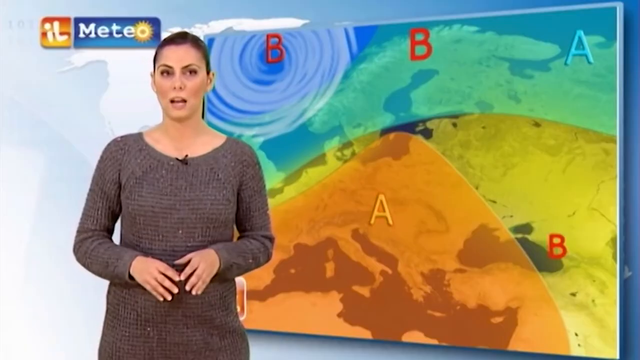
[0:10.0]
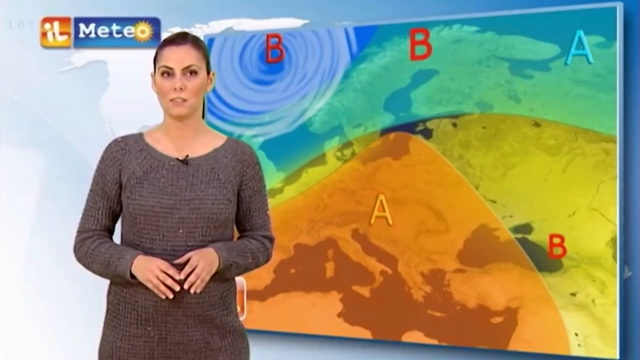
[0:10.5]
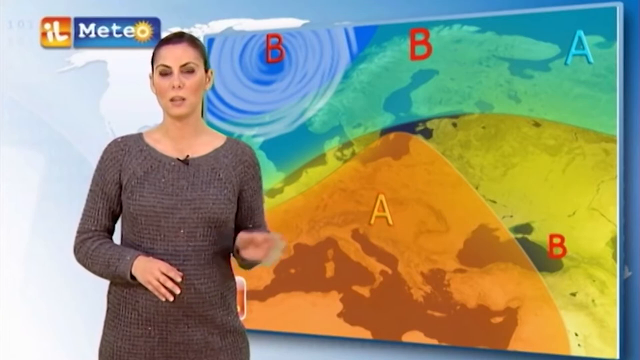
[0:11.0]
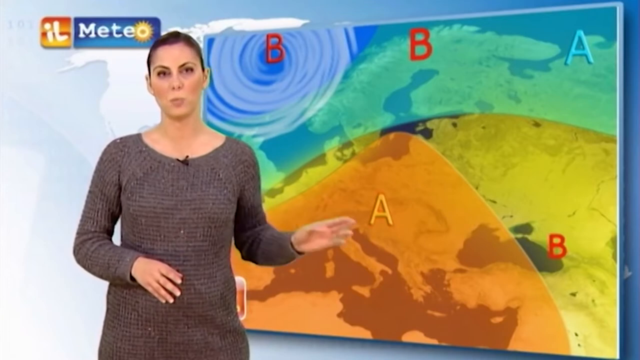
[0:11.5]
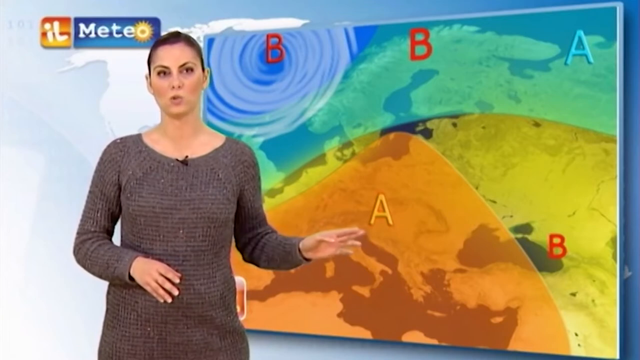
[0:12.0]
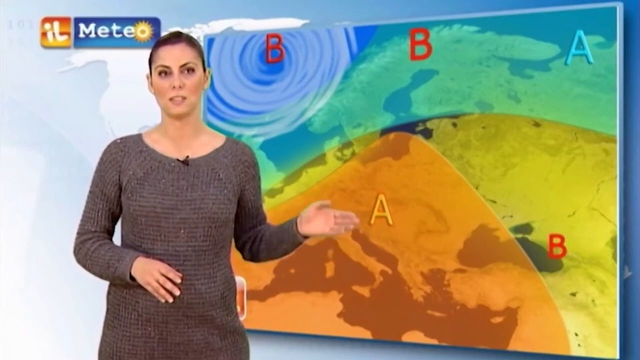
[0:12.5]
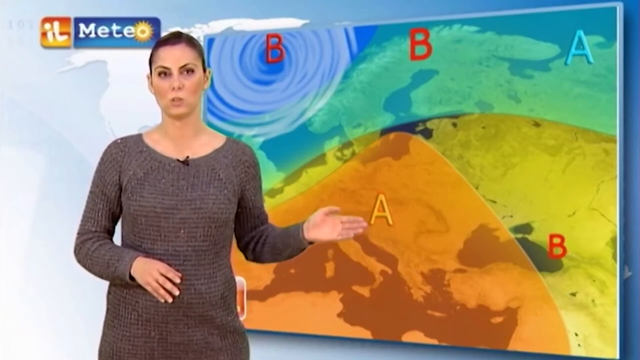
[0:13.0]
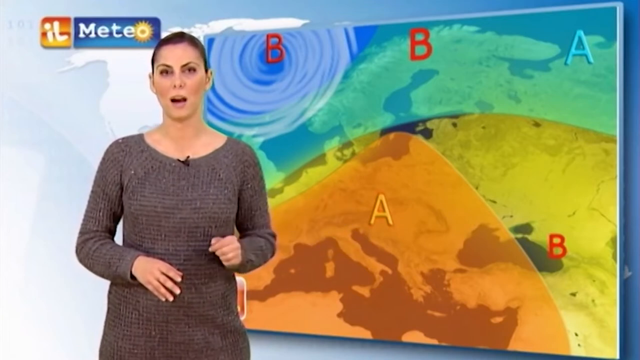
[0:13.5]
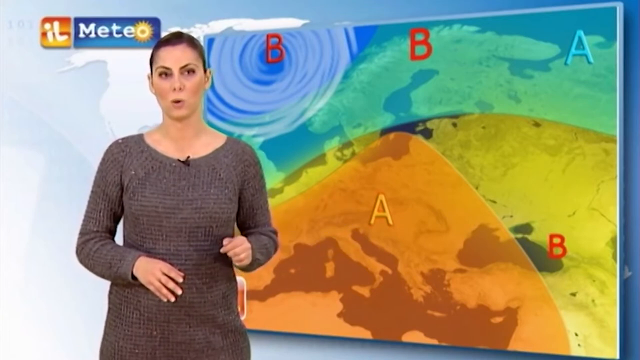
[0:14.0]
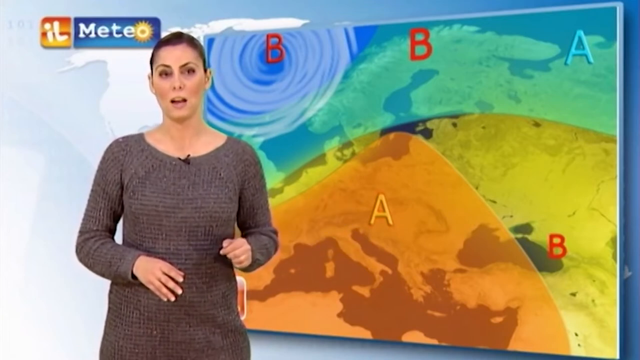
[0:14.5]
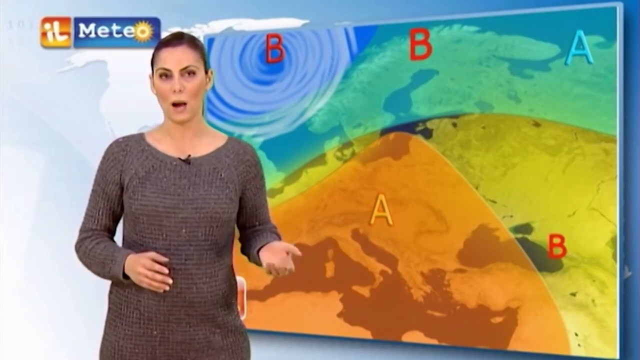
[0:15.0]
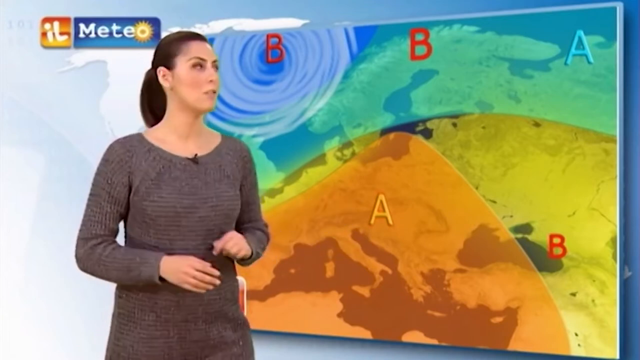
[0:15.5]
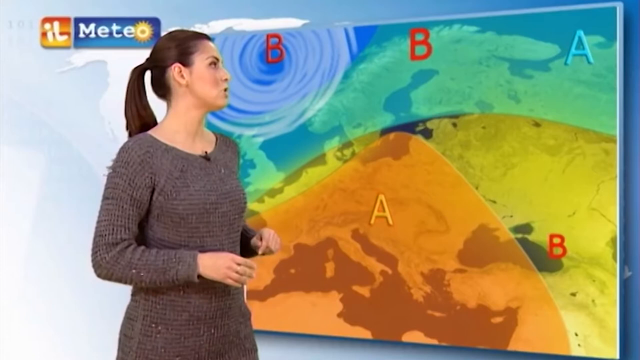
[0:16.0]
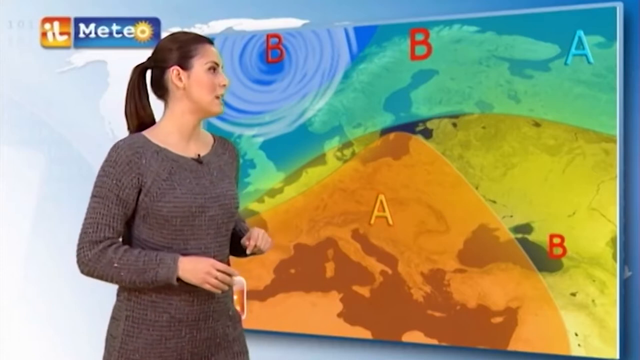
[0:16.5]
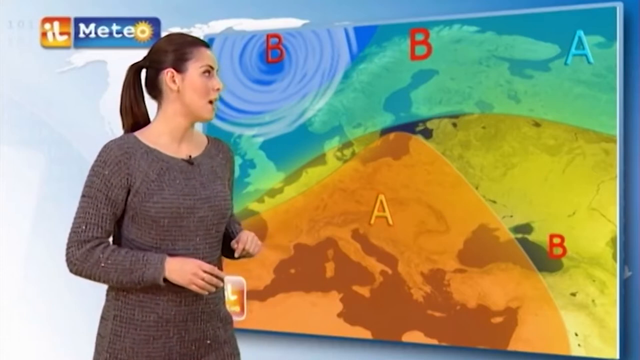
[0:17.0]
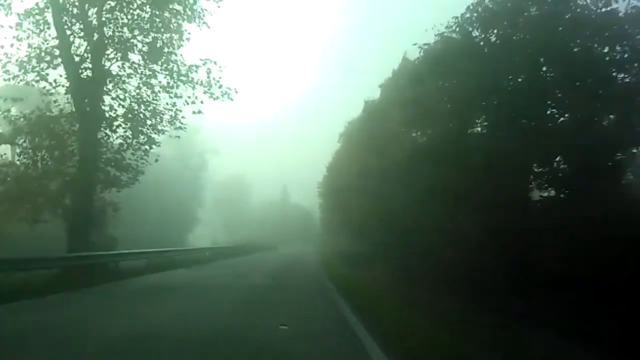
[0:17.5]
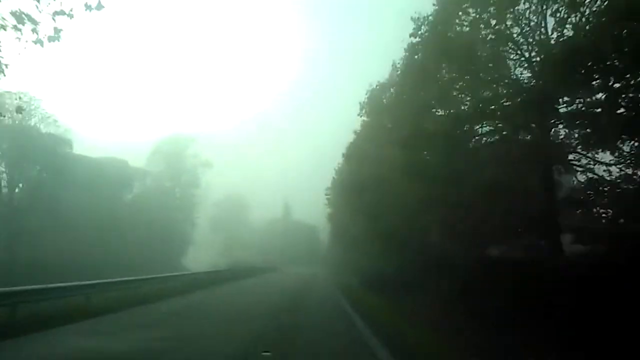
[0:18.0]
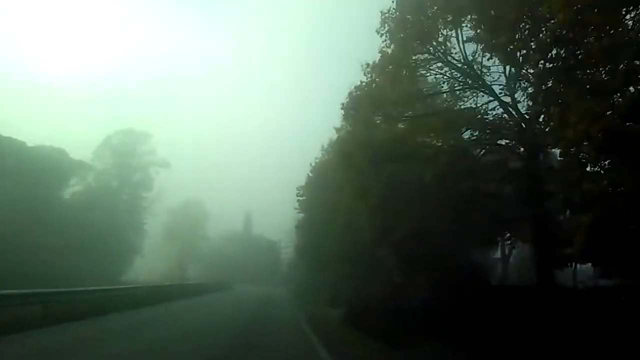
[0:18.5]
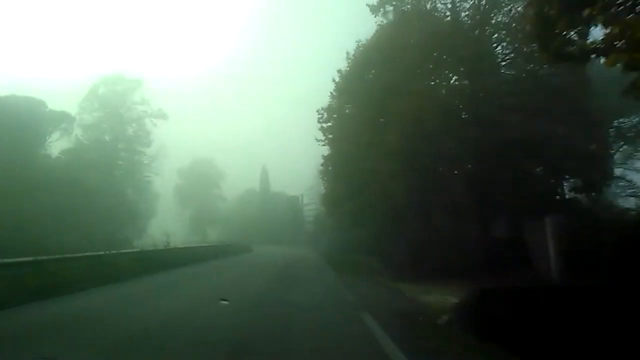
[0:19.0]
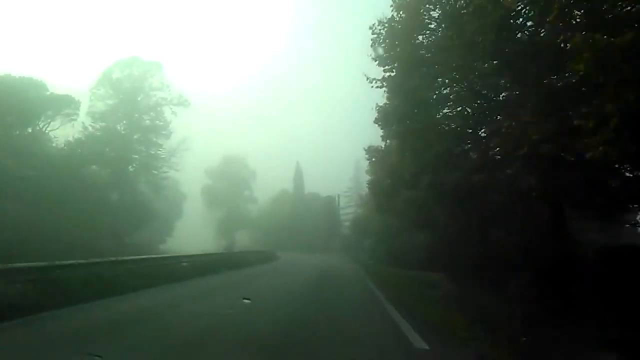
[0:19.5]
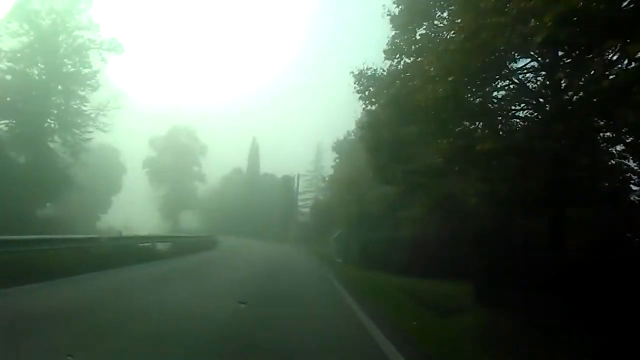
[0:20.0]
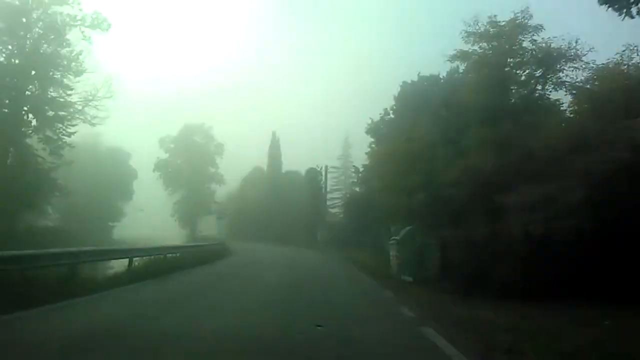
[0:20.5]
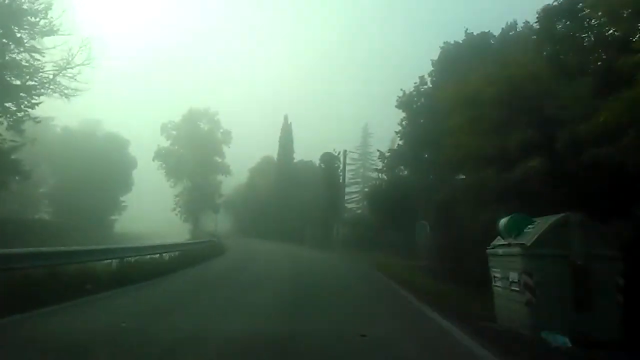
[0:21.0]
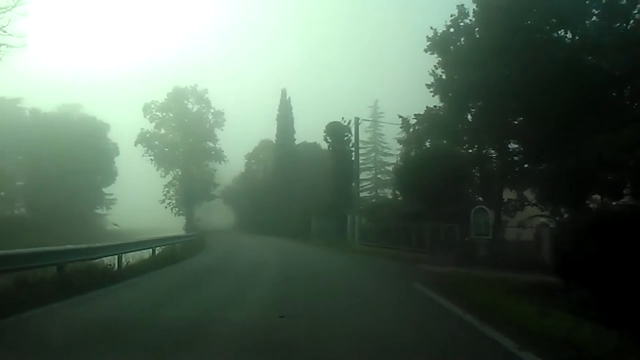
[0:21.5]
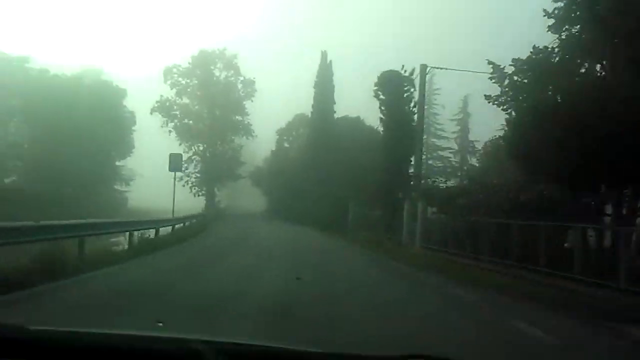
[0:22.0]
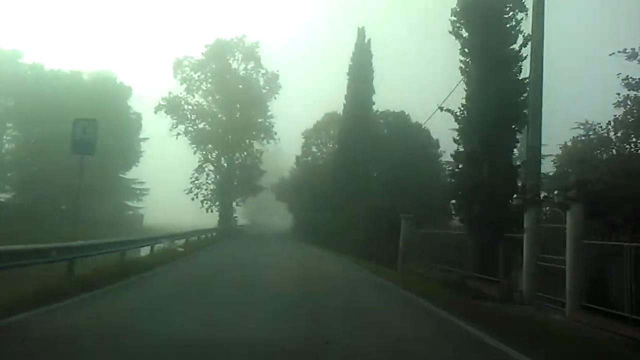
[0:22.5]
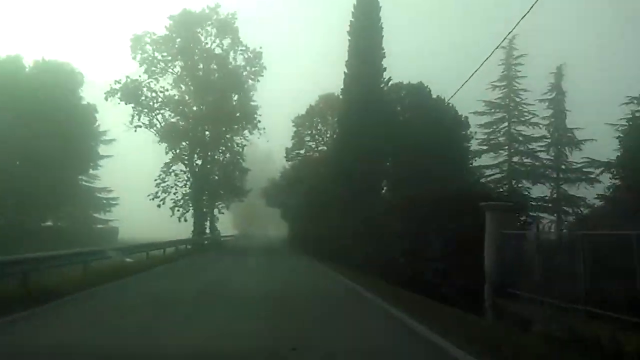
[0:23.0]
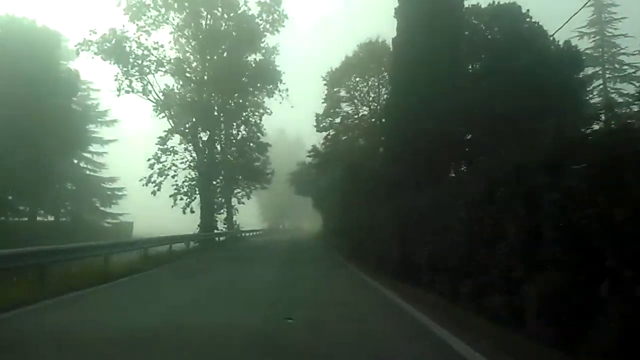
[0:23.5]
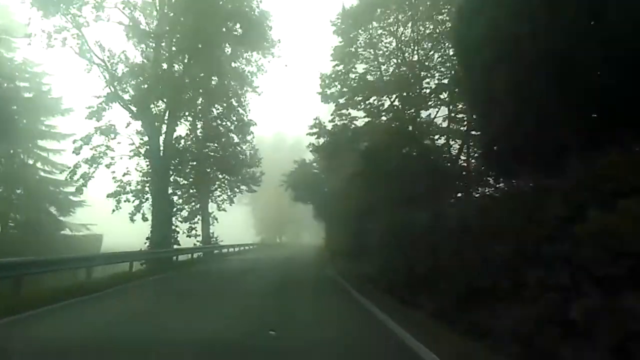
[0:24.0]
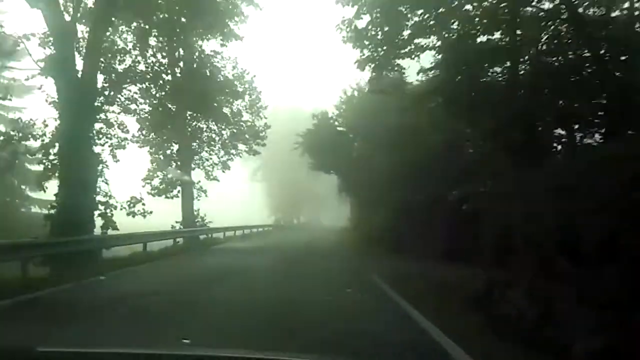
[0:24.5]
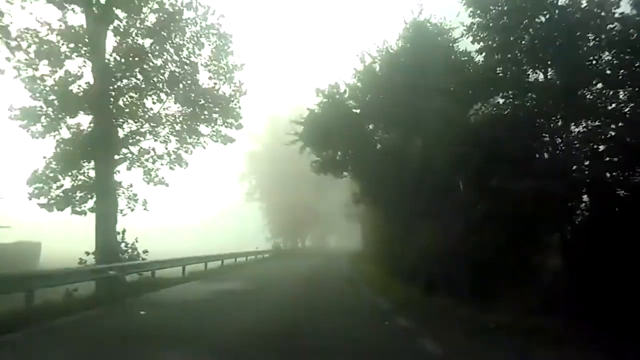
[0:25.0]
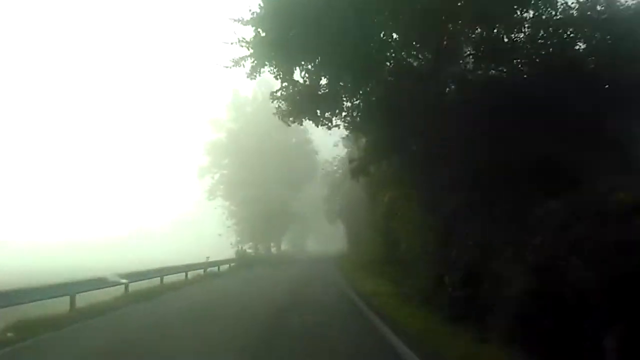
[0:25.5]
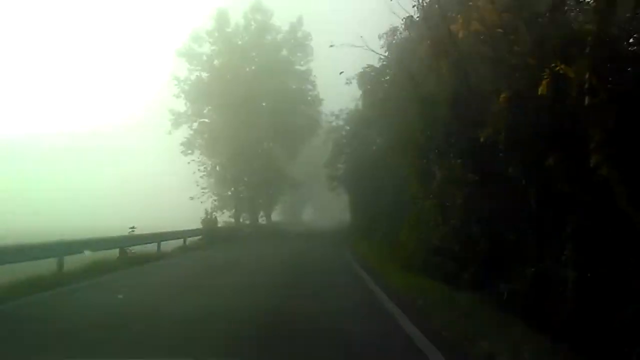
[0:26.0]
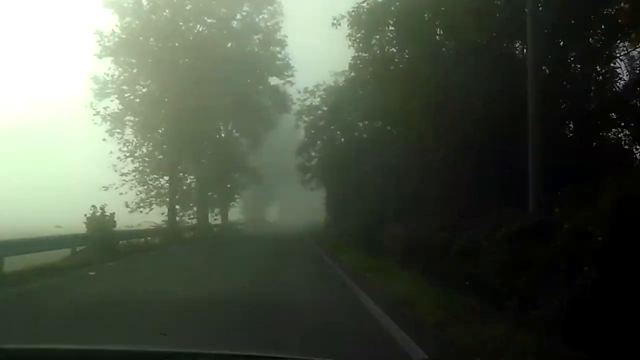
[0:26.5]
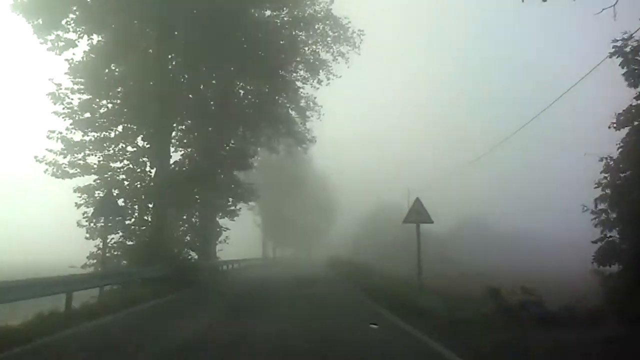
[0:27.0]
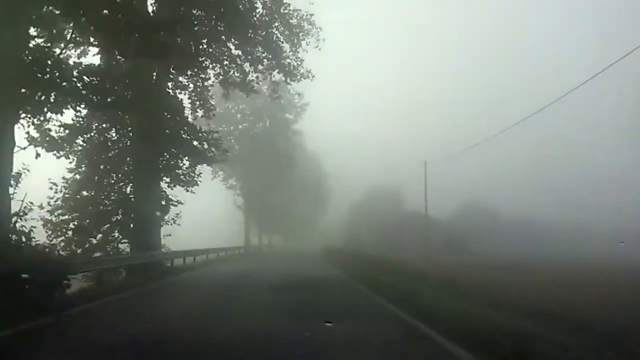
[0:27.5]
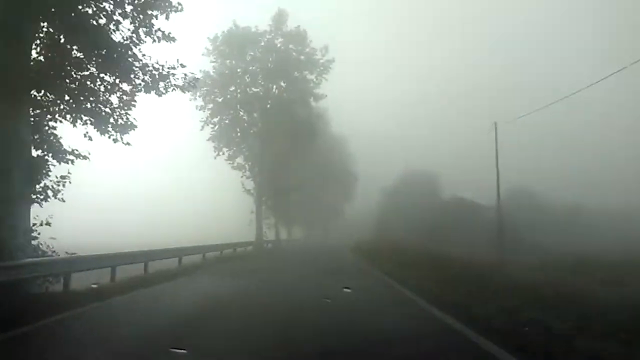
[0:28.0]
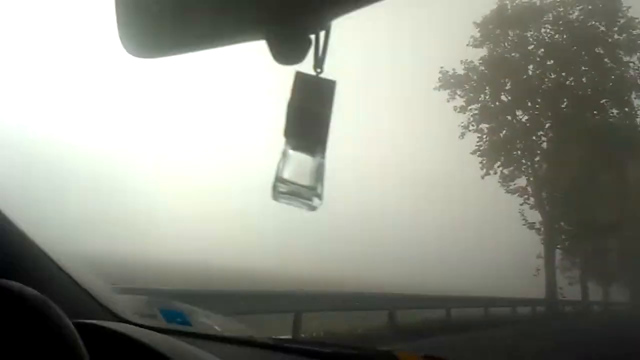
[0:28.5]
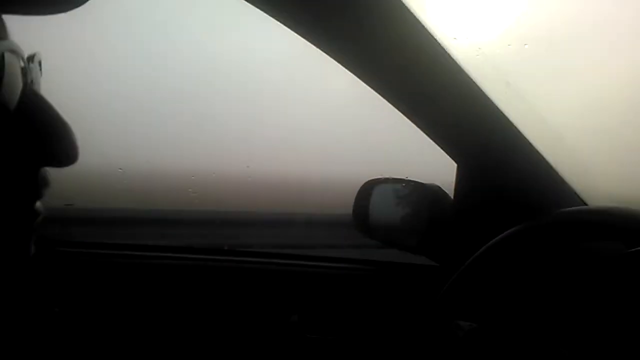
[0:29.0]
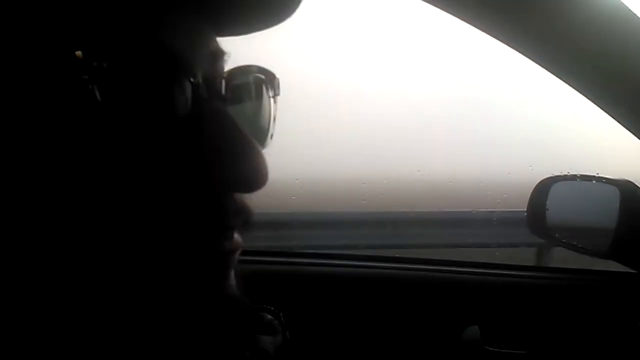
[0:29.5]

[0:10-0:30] A woman, probably some type of weather reporter, speaks into a camera in front of a large backdrop that looks like a globe with blue and green skies. Letters such as "BBAAB" are scattered on the screen. Her hair is pulled back into a ponytail, and she wears a gray sweater dress with a black microphone clipped at the top. Her hands are lifted near her sides, almost akimbo, and move forward and back as she talks. She then turns to her left and is seen in profile, speaking. The video switches to outdoors in a very foggy, almost rainy environment. A road lies ahead, raindrops are on the camera, and the vehicle doing the filming moves at a pretty fast clip, maybe 30 to 40 miles an hour. The camera turns to show the driver, a younger male, probably in his twenties or thirties, wearing sunglasses and with a goatee, smiling and looking straight ahead.